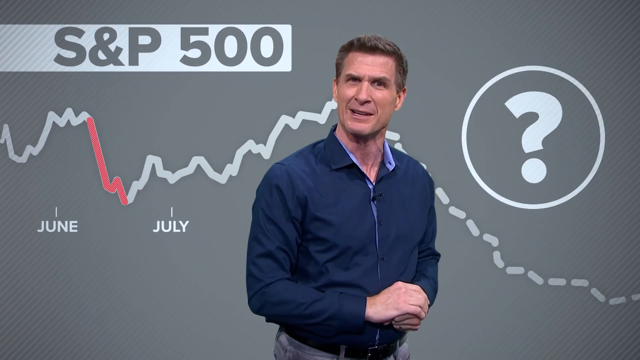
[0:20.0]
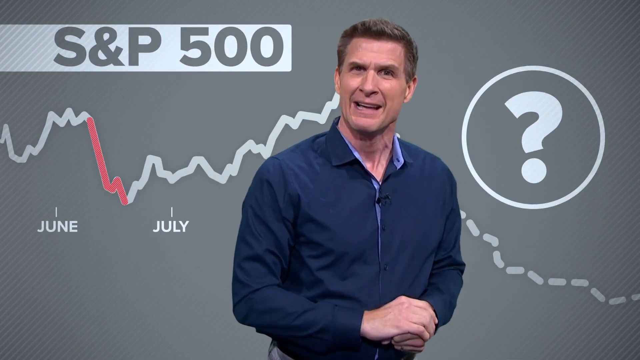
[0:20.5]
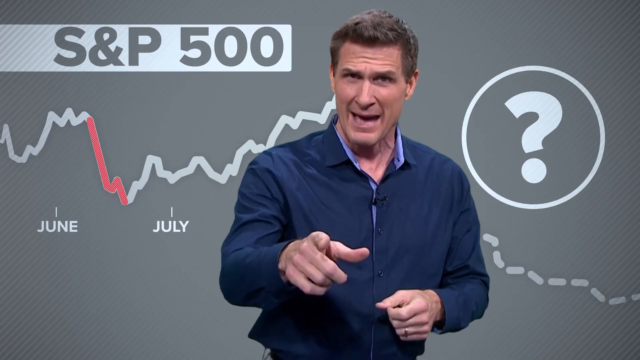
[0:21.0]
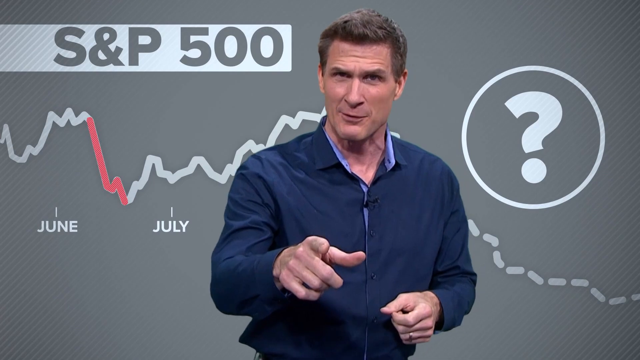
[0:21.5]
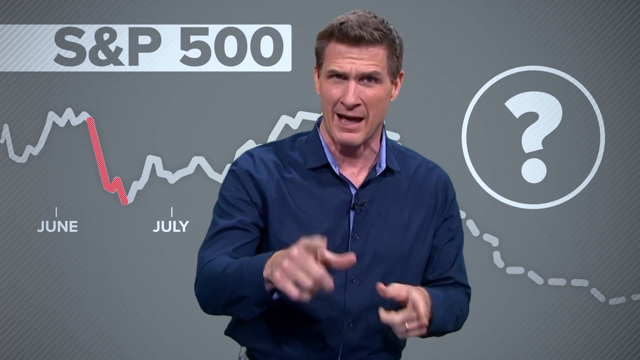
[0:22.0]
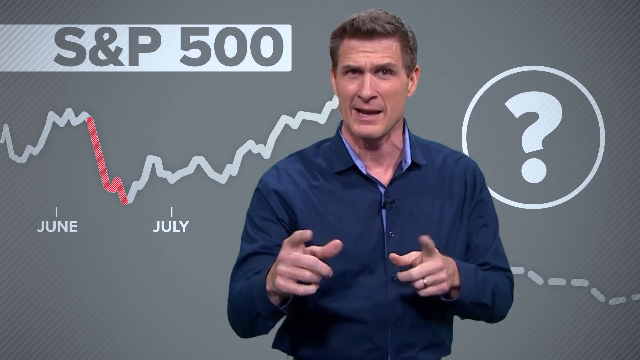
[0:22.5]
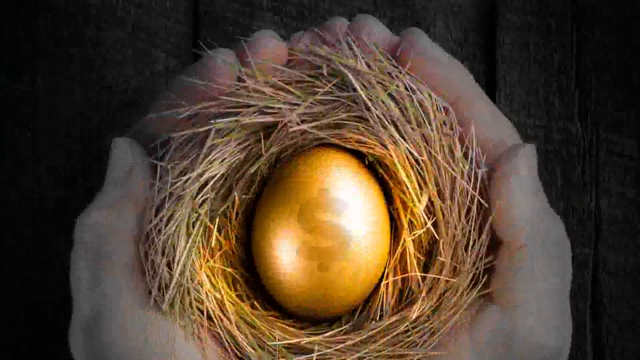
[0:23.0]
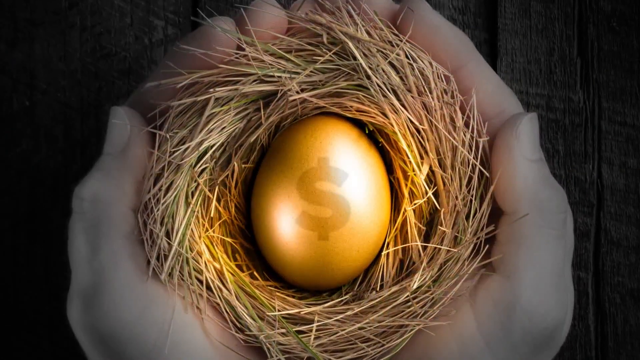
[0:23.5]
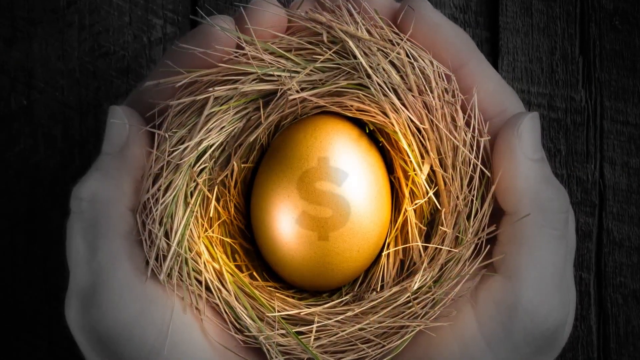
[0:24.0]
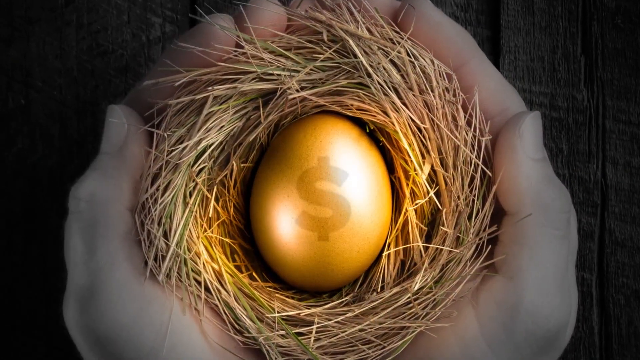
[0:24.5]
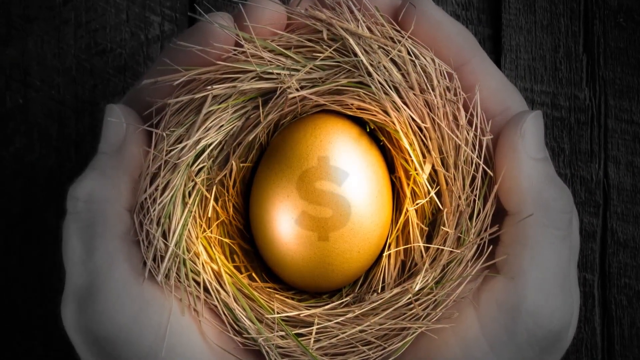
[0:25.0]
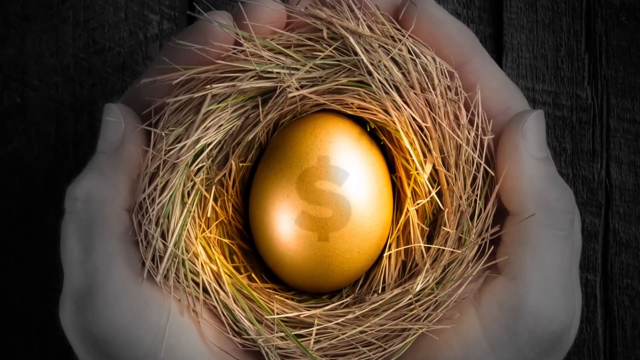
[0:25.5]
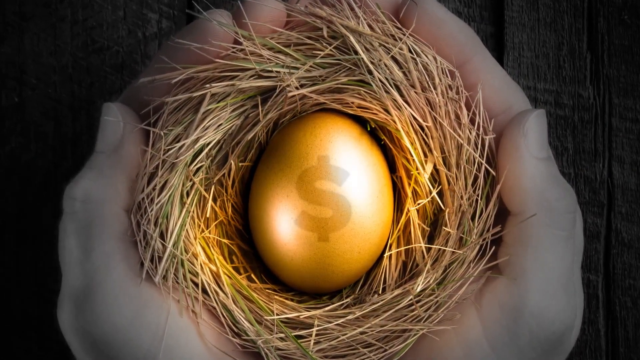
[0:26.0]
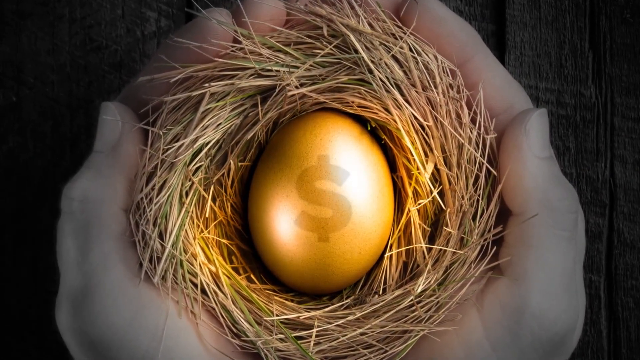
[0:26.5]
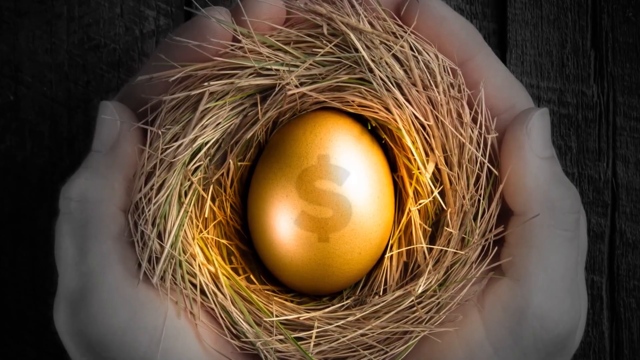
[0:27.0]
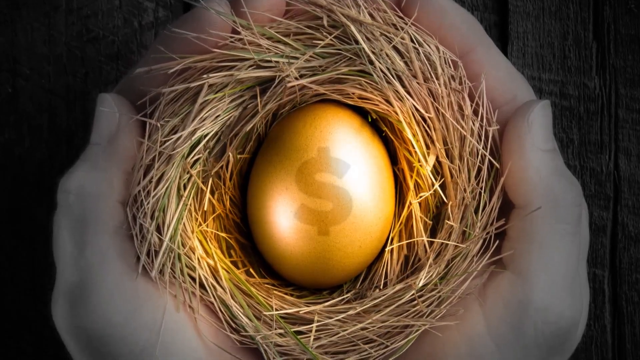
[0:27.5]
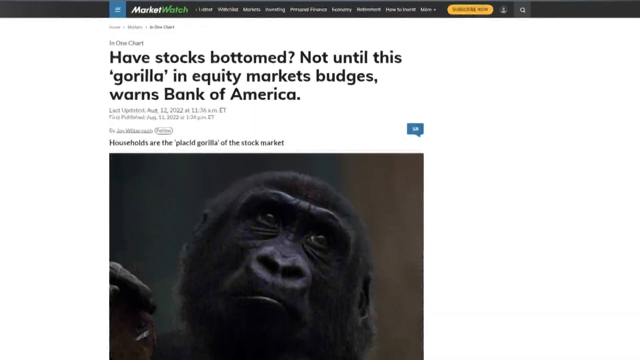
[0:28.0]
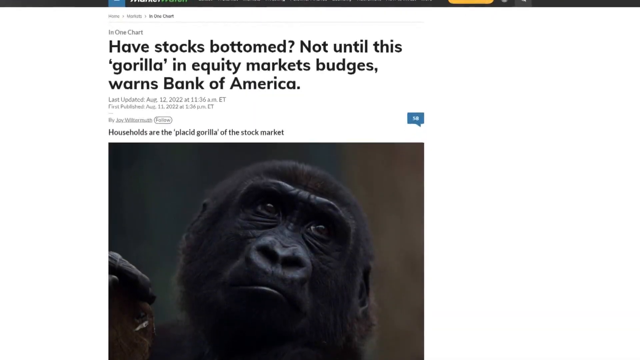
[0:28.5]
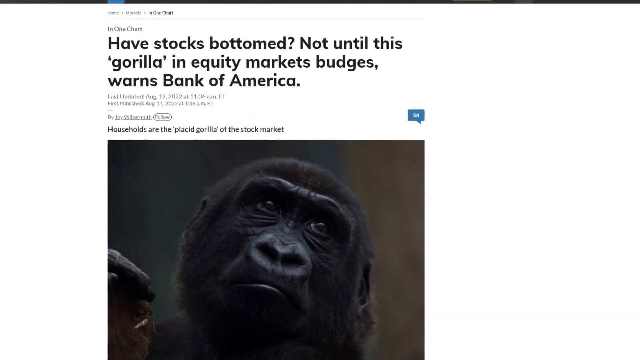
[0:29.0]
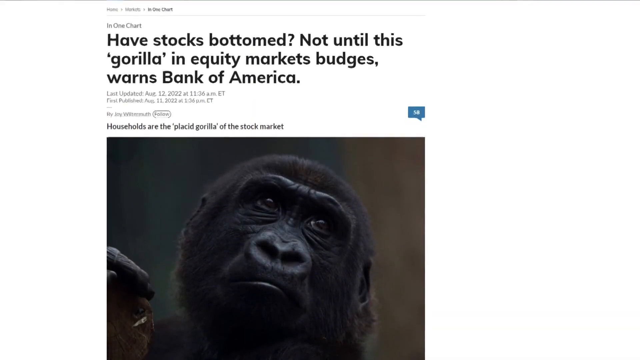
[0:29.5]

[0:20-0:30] The man in blue is standing in front of the S&P 500 graphics, still talking. The video cuts to an image that apparently represents a nest egg or savings: what looks to be a pair of hands holding a literal nest with a golden egg in it, with a dollar sign on the egg. Next comes a graphic with a white background and a picture of a gorilla; text above it begins "have stocks bottomed not until this gorilla" and ends "warns Bank of America".